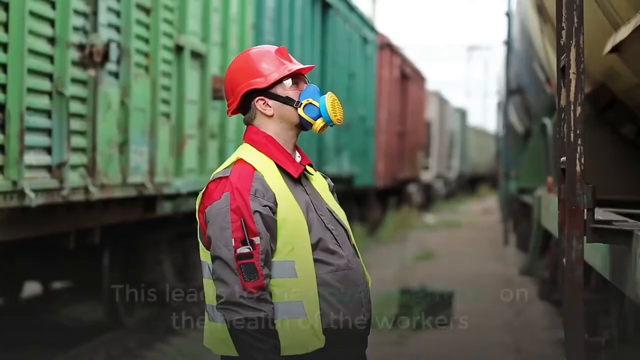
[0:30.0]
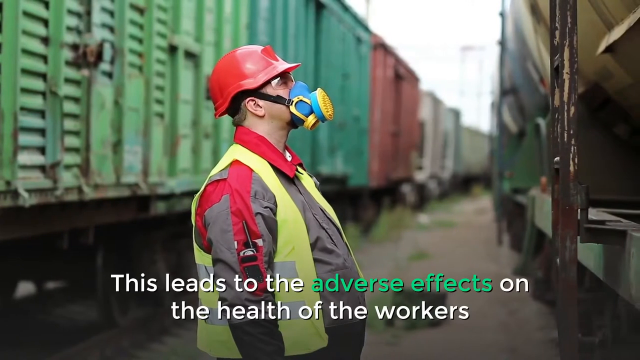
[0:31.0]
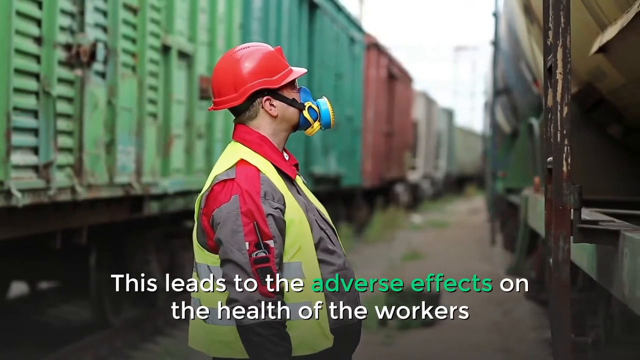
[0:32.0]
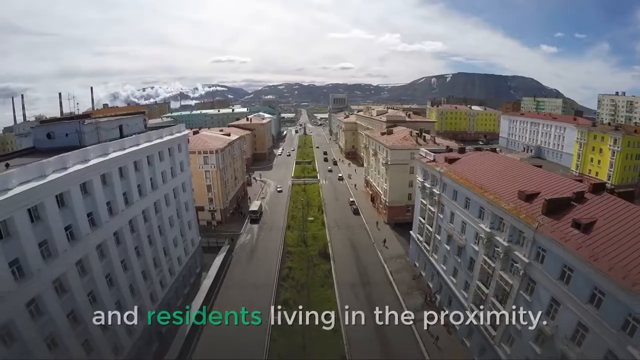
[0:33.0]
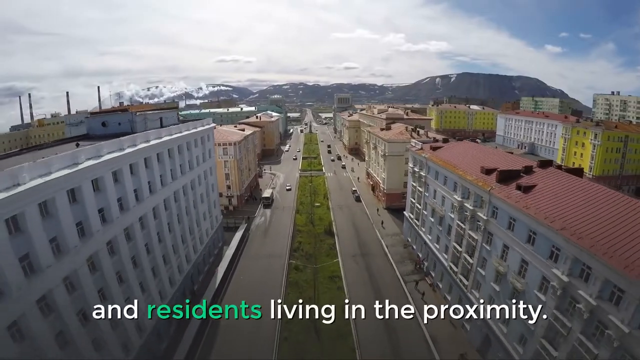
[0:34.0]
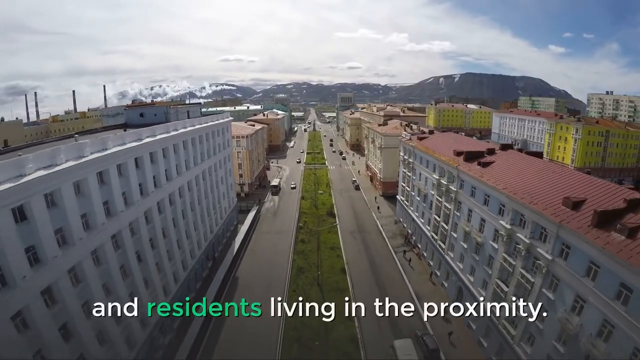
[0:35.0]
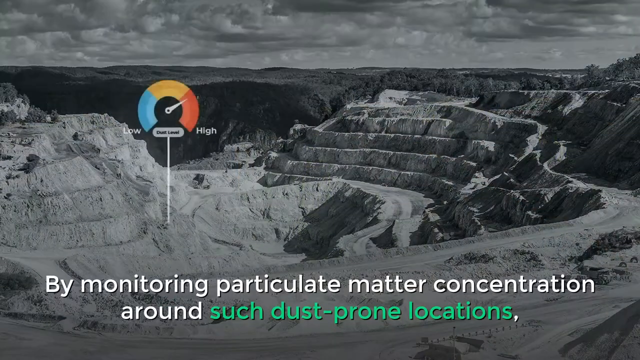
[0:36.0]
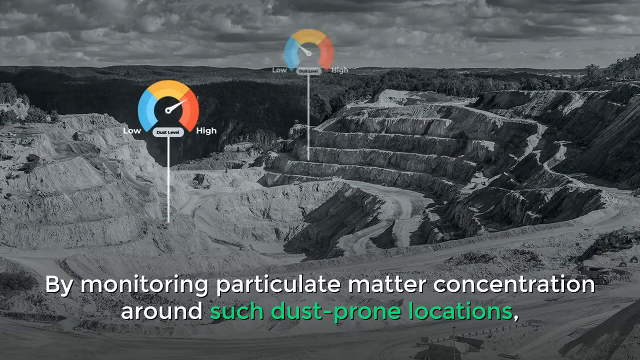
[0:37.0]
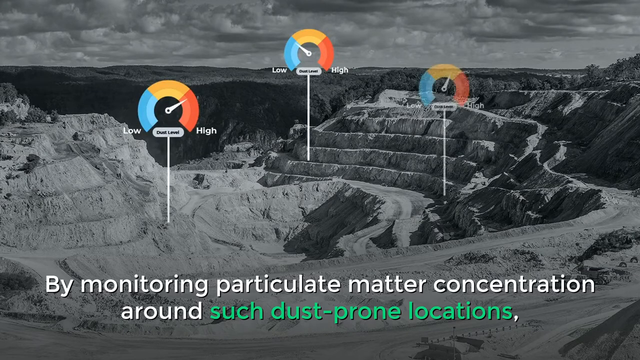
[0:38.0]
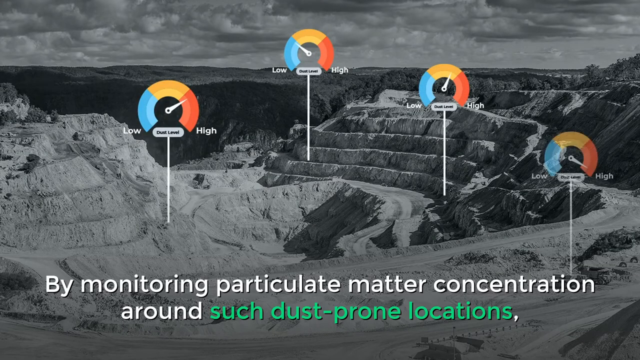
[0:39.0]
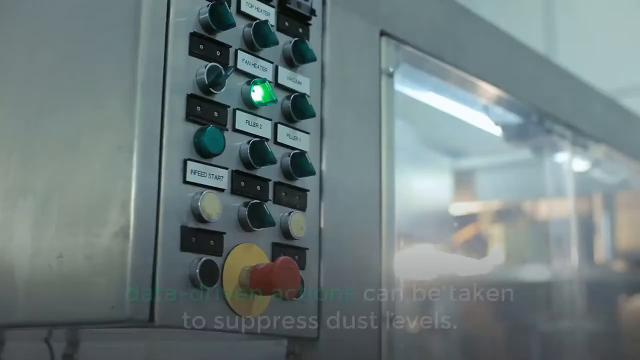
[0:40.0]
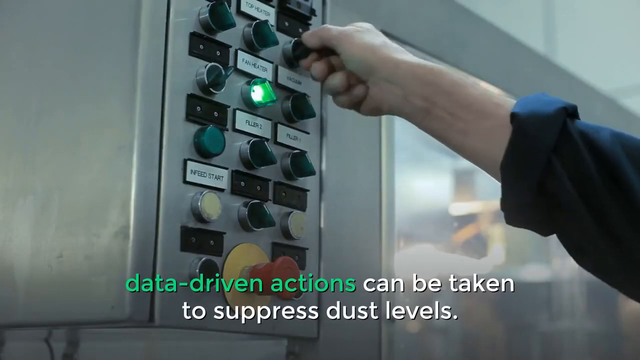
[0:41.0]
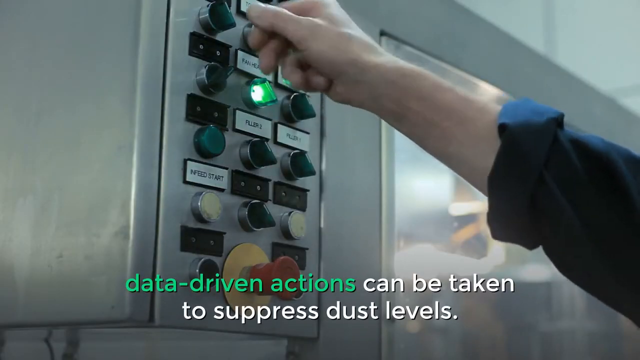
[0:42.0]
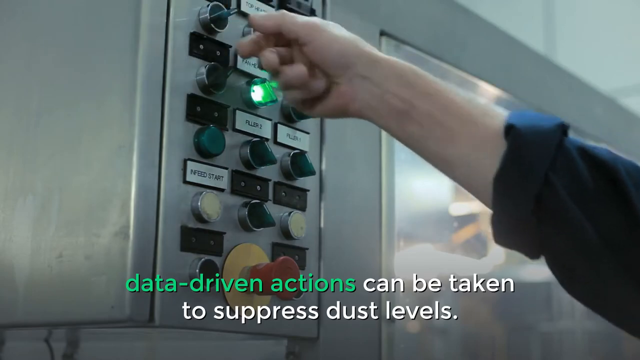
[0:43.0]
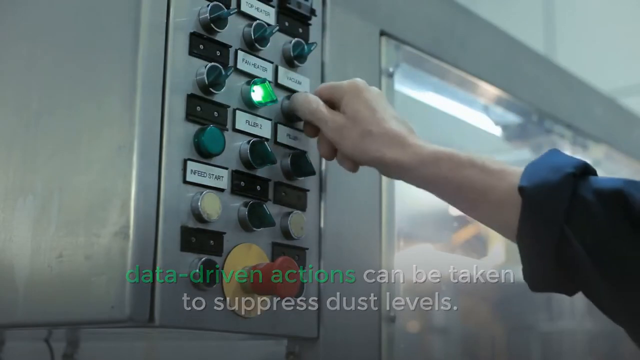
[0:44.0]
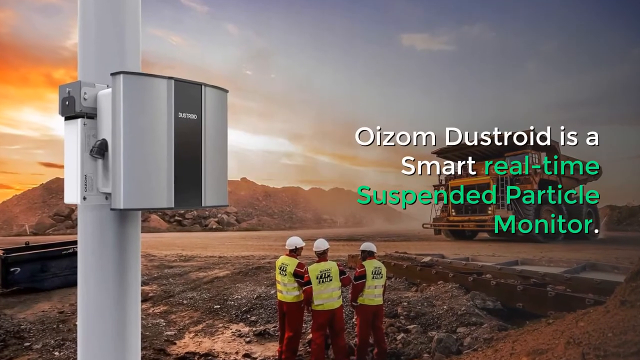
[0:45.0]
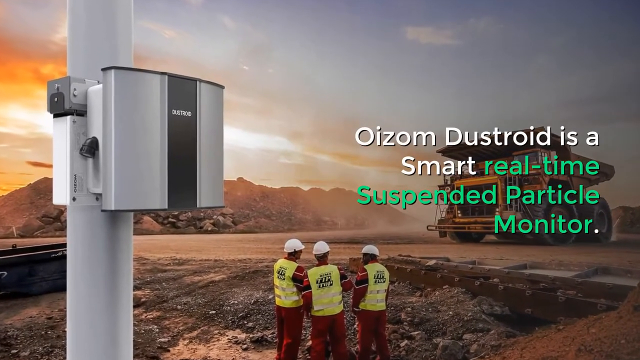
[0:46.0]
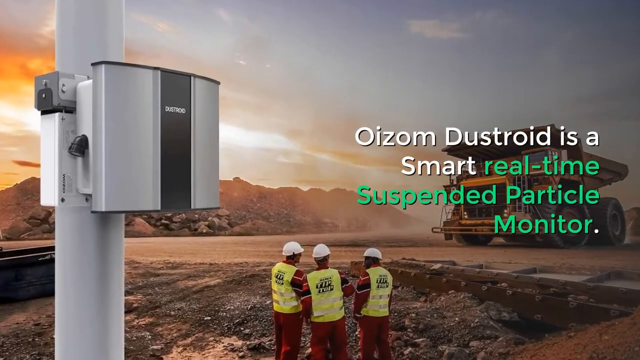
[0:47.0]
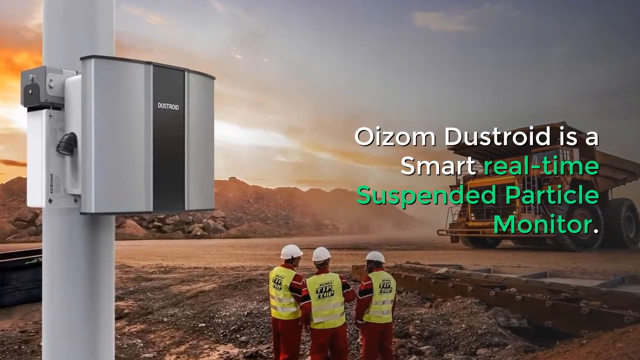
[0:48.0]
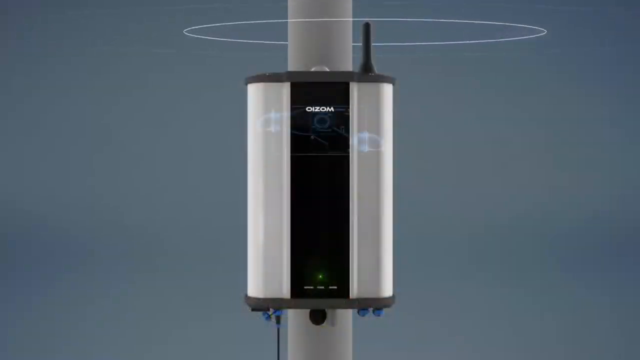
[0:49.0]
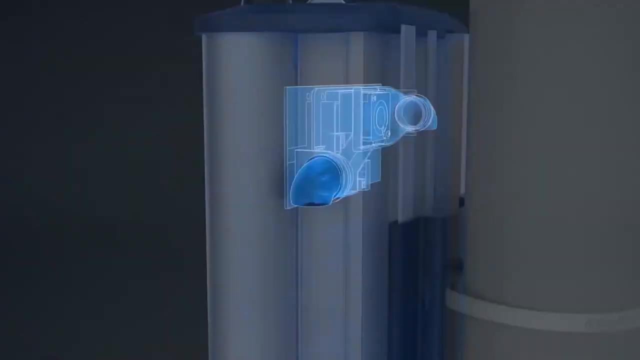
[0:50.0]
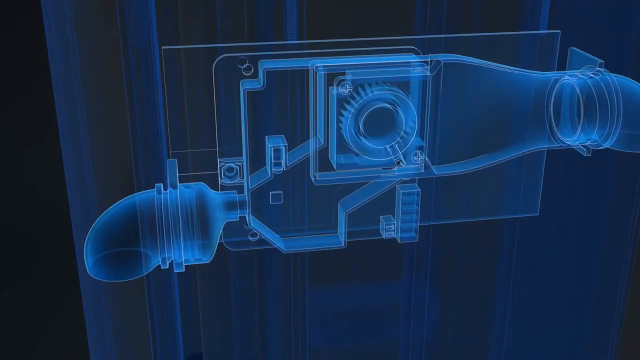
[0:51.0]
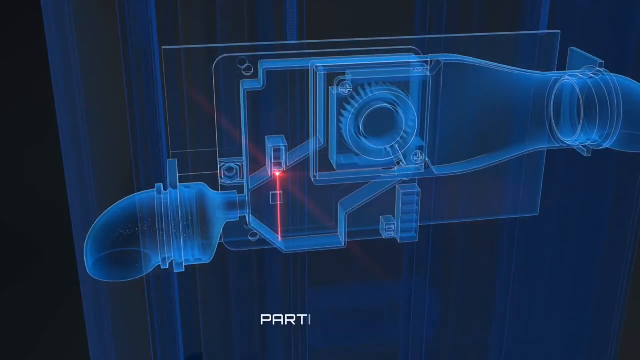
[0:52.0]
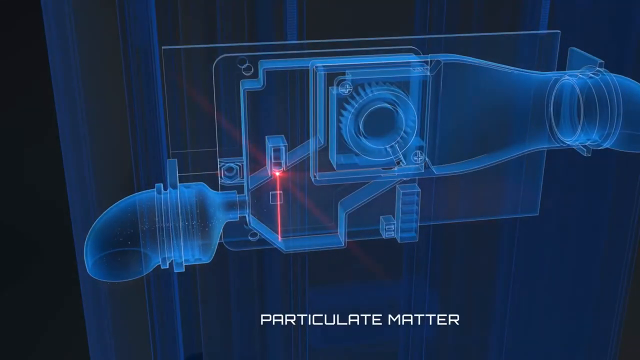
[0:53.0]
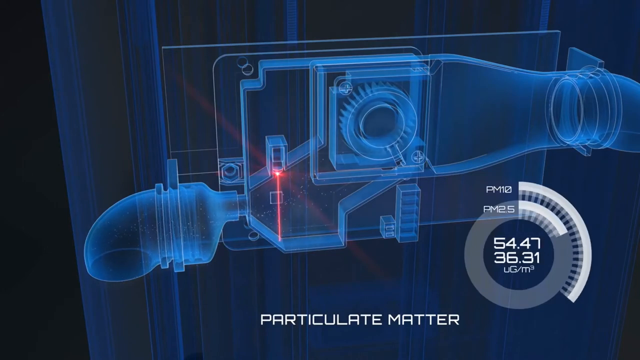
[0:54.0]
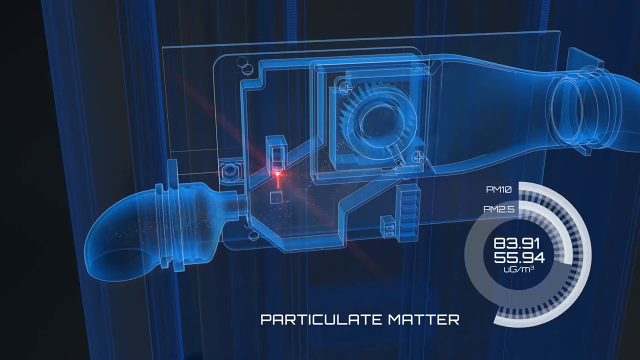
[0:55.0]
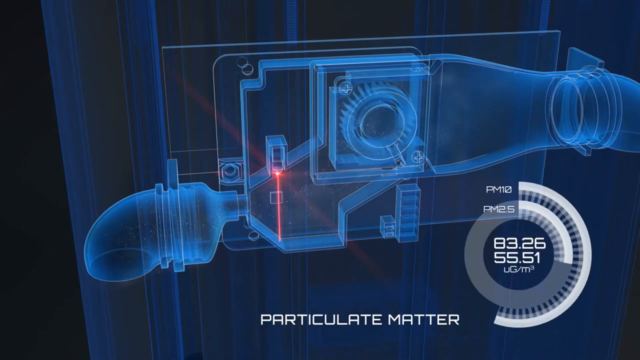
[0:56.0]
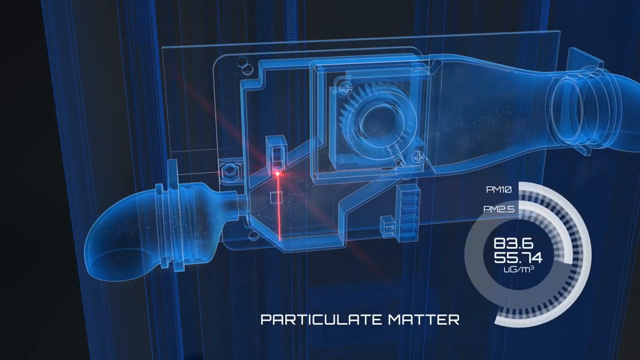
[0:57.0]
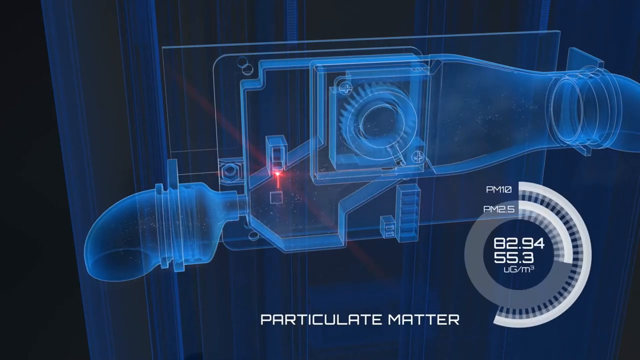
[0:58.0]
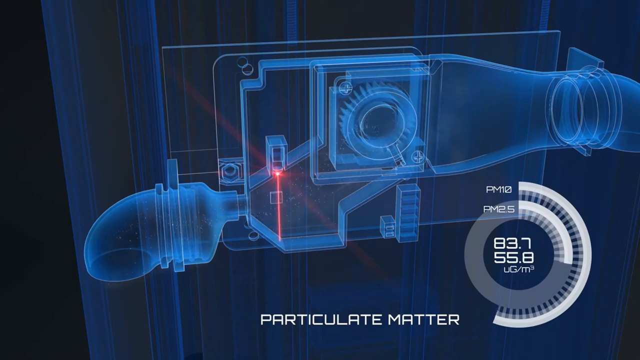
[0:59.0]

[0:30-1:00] A man in a yellow reflective vest, a red hard hat, and a sort of respirator on his face looks at train cars, while a lower third reads 'This leads to the adverse effects on the health of the workers'. He continues looking at the trains, then the video cuts to a flyover of a town with several large buildings that look like apartment buildings, mountains in the background, and a blue sky with clouds. A lower third at the bottom says 'and residents living in proximity'. Next is a black and white photo of what looks like a quarry; a lot of work has clearly been done there, though it does not look like it is currently in use. A colored meter on top of the photo runs from low to high, apparently showing the dust level: low is blue, medium is yellow, and high is red, and the pointer points toward the high part. The lower third reads 'By monitoring particulate matter concentration around such dust prone locations', and several other meters pop up. The video cuts to a hand turning different knobs, apparently indoors, with another person apparently nearby, and a lower third reads 'Data driven actions can be taken to suppress dust levels'. The hand continues turning dials. Then comes a still shot being zoomed in on, showing what looks like possibly some sort of dust sensor, a particle monitor, in the foreground and construction workers in the background near a dump truck. A title reads 'Oizom Dustroid is a smart real time suspended particle monitor'. An animation follows of the particle monitor attached to a pole; it appears to be a white device with a black strip down the middle and an antenna, and an animated signal comes from the antenna. The view then moves into a sort of x-ray view of the inside of the device, shown in blue, where a red laser detects particles moving through it, and numbers in the bottom right-hand corner act as a sort of meter showing what the device is detecting.